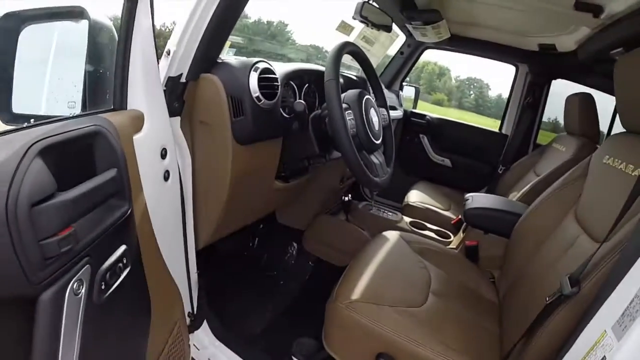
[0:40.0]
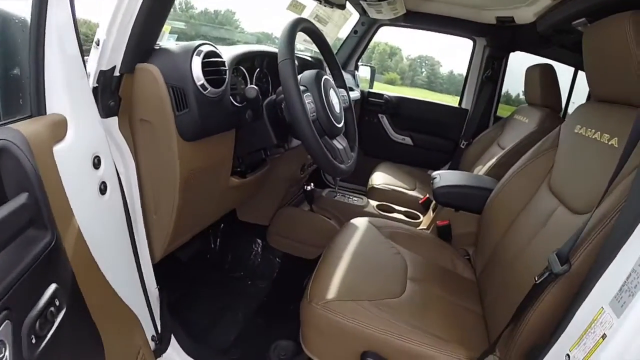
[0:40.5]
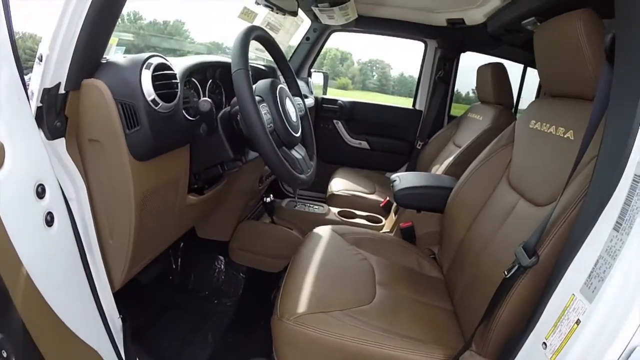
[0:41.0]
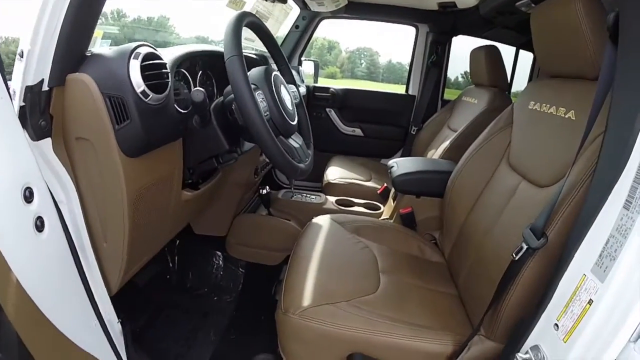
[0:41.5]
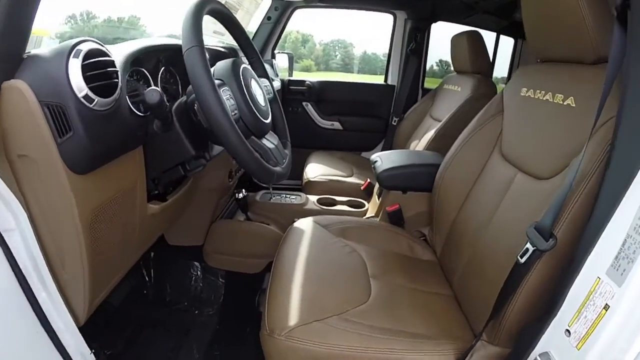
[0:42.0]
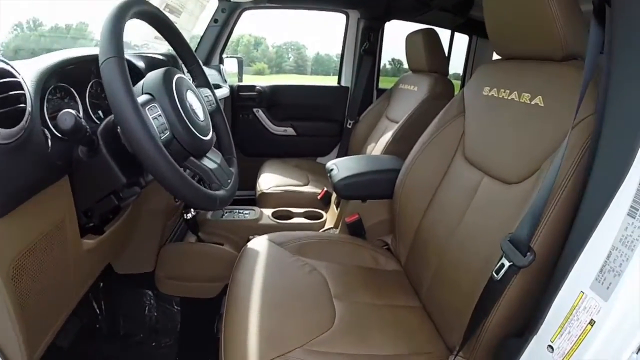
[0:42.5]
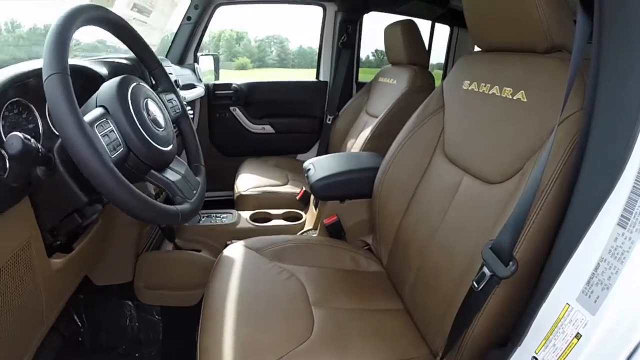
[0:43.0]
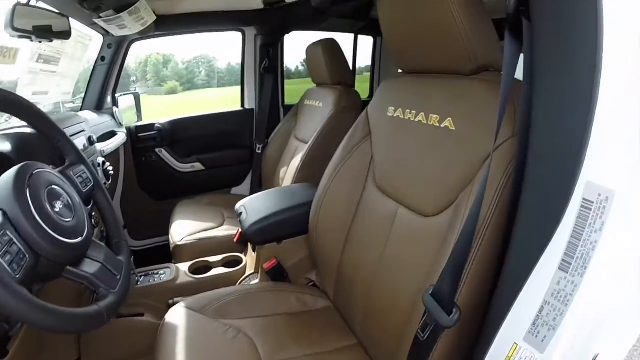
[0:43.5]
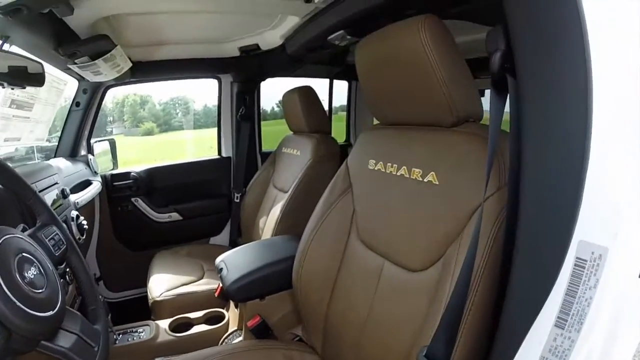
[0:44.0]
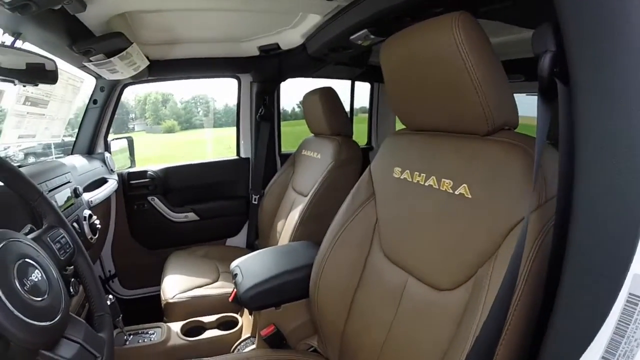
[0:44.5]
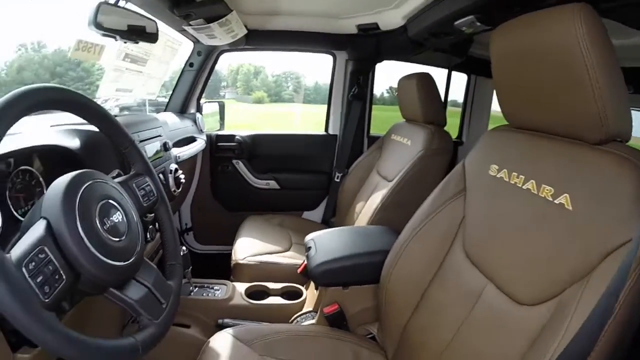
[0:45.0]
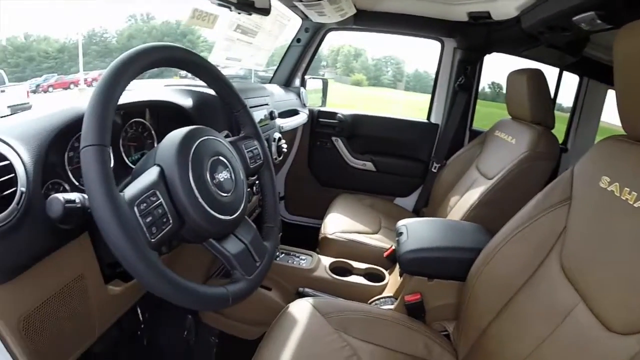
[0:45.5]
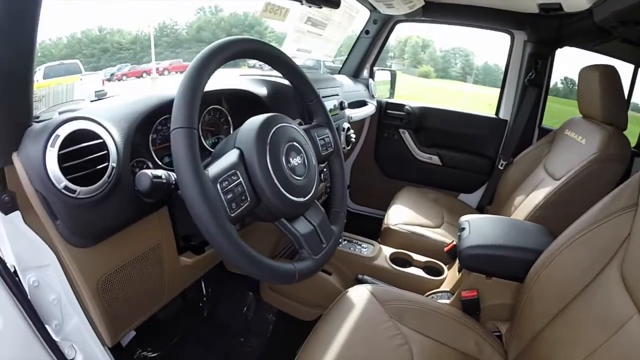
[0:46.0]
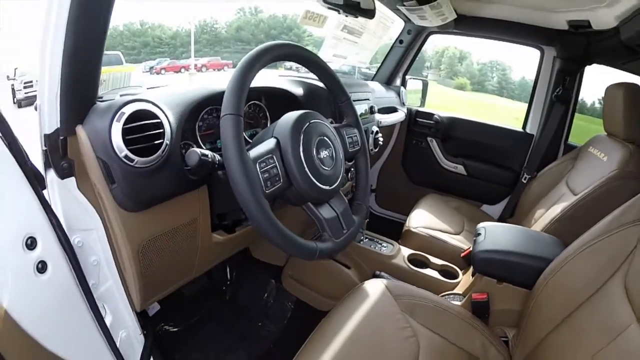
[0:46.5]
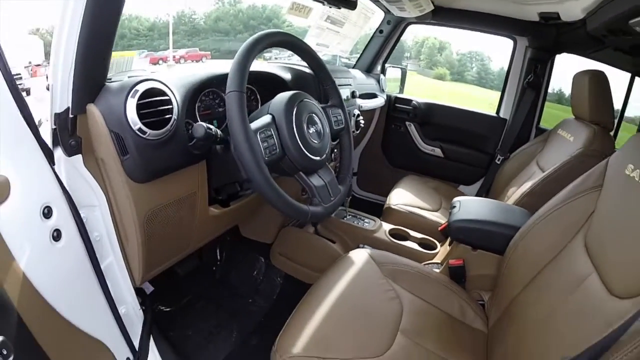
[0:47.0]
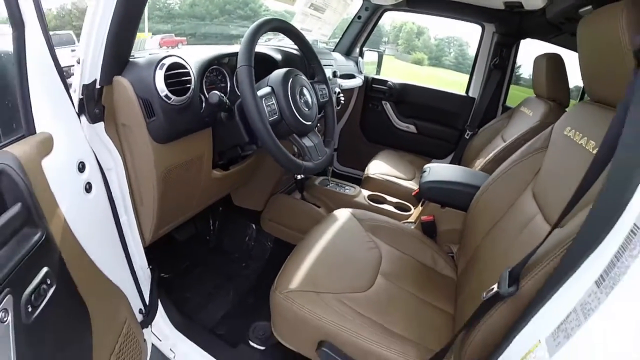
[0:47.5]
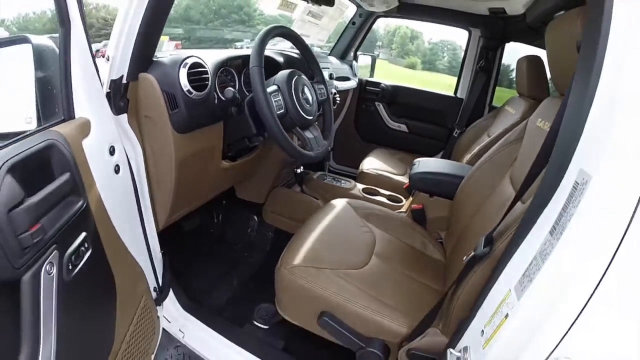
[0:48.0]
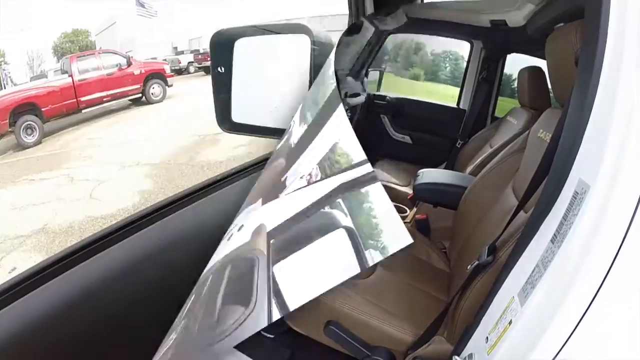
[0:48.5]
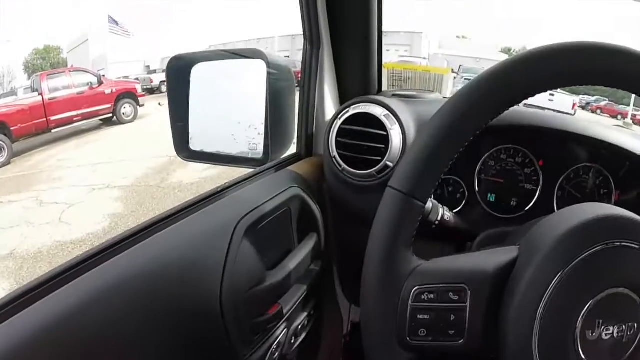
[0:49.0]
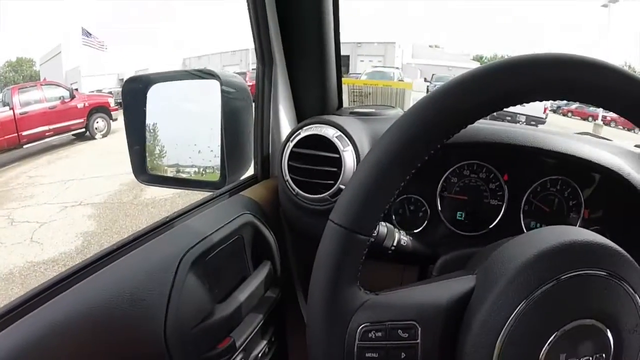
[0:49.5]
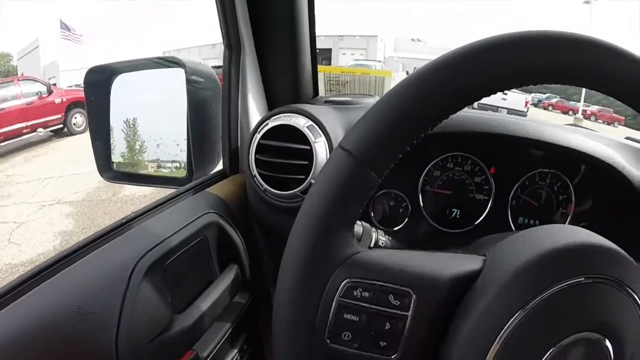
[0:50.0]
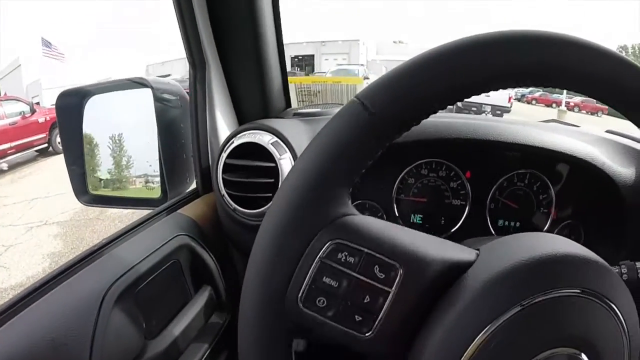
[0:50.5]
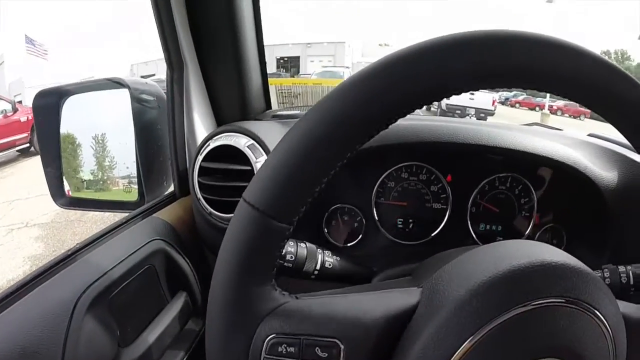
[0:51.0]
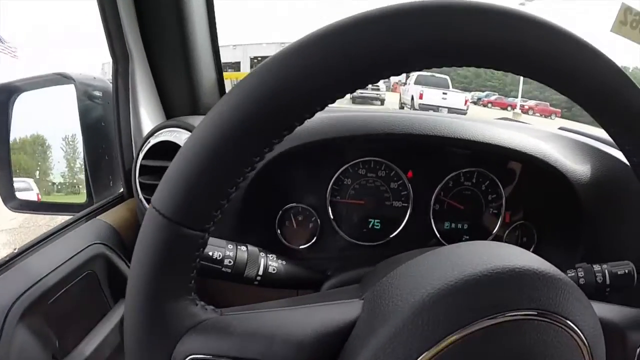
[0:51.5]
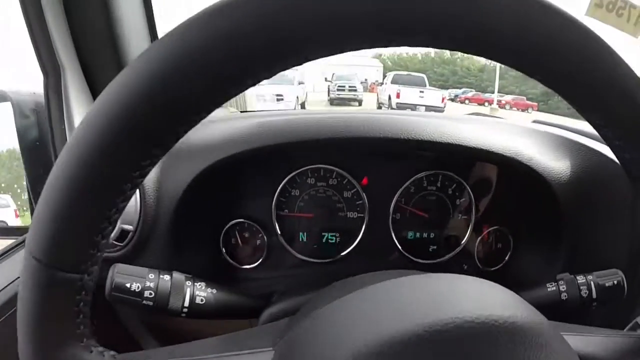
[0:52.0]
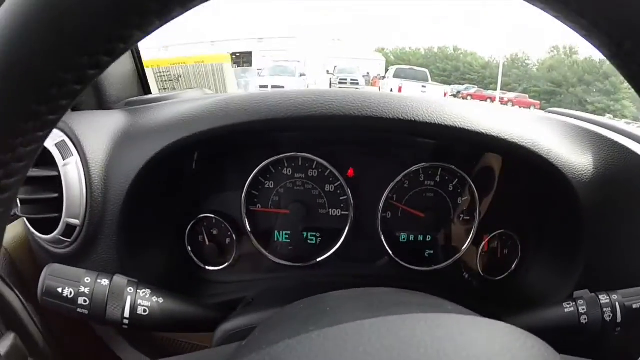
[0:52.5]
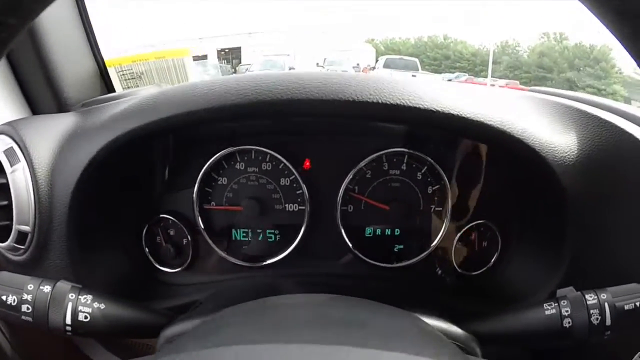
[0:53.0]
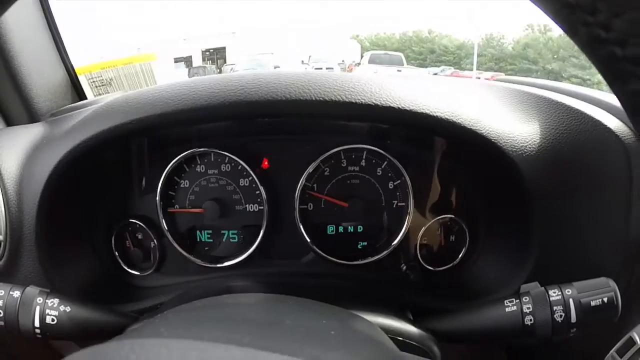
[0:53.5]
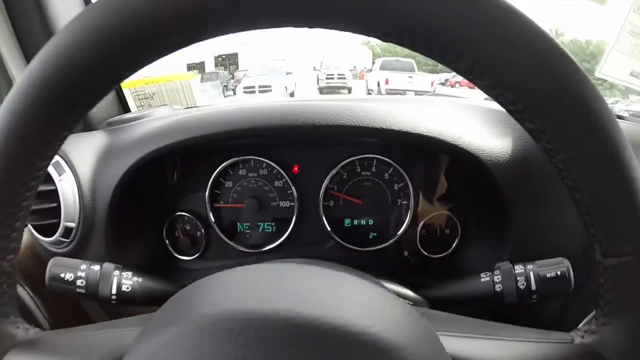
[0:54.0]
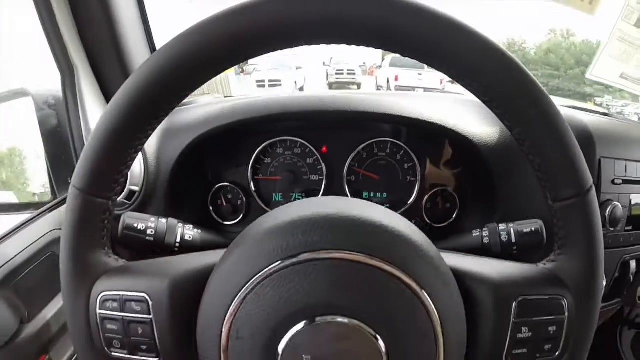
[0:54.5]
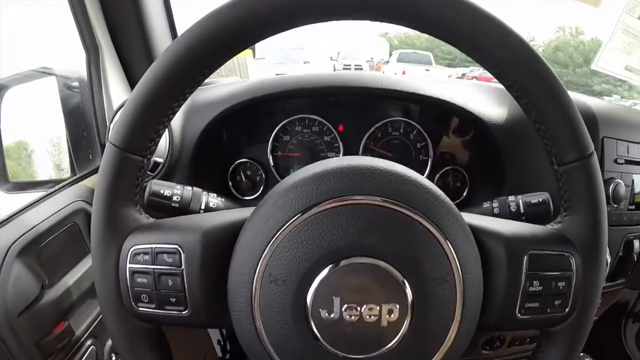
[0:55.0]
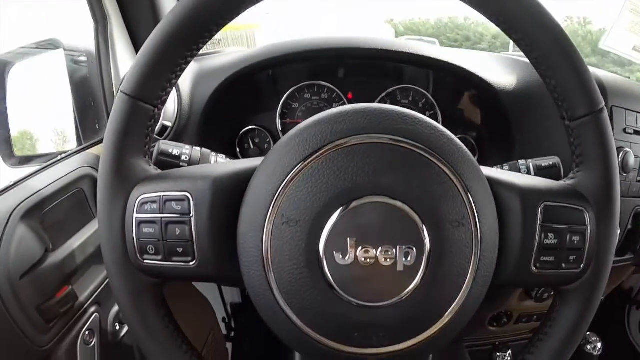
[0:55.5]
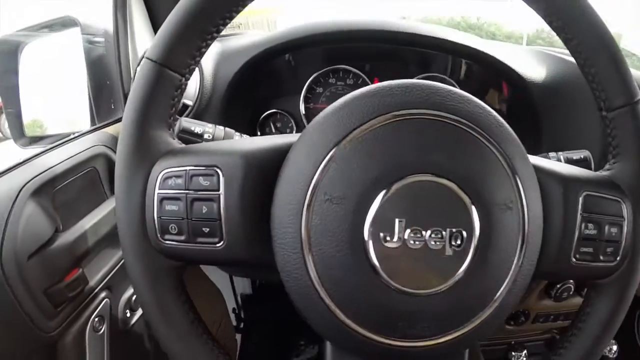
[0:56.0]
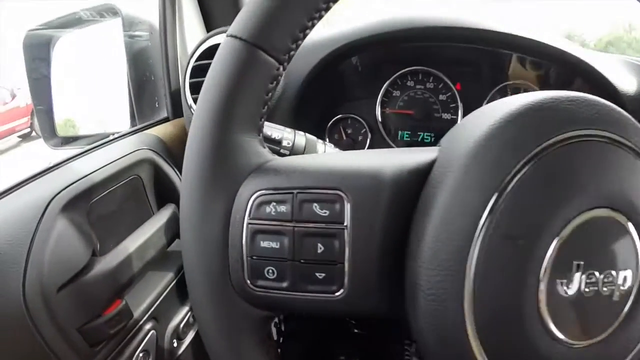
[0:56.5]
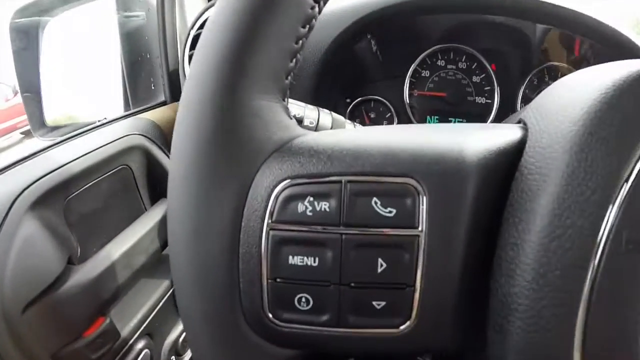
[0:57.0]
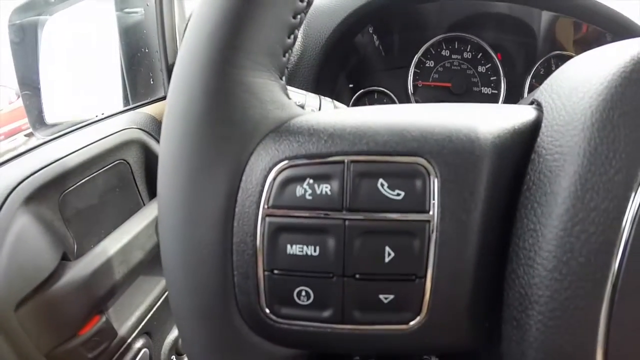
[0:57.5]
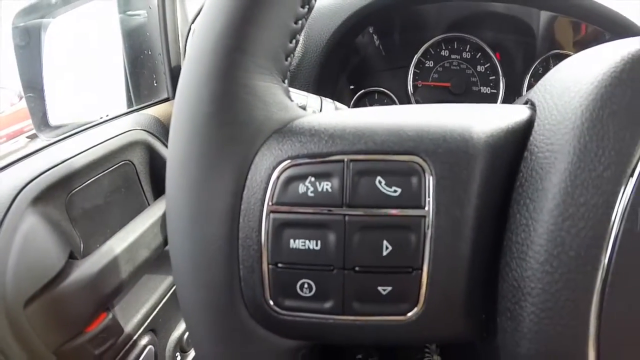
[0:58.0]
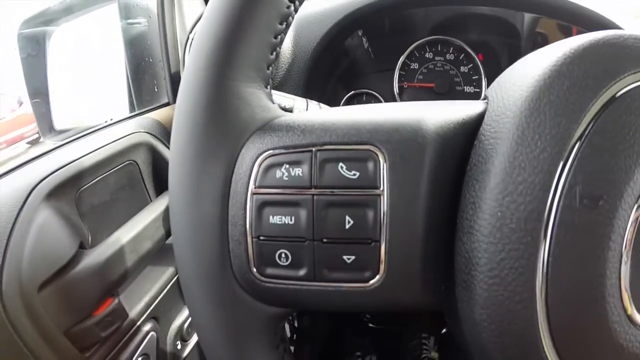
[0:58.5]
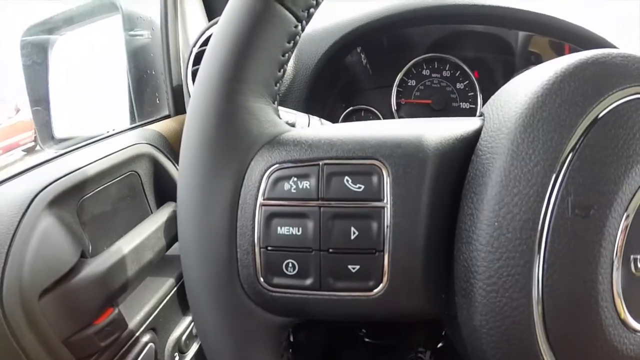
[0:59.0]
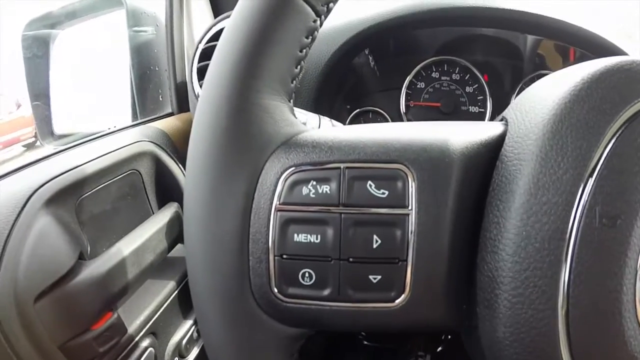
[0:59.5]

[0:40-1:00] The inside of the white Jeep is filmed. The seats are leather, and the camera focuses mostly on the driver's side; the driver's seat says "Sahara," and so does the passenger seat, which is seen much better from this side. The steering wheel is black, as is the turn signal. A speedometer is behind the wheel, with its numbers kind of moving fast. The steering wheel has controls on it, including phone controls. Through the back windows, lots of trees and a grassy field are visible, toward the upper right of the frame and also toward the middle.